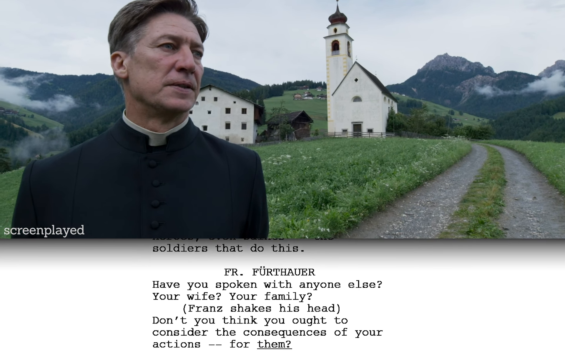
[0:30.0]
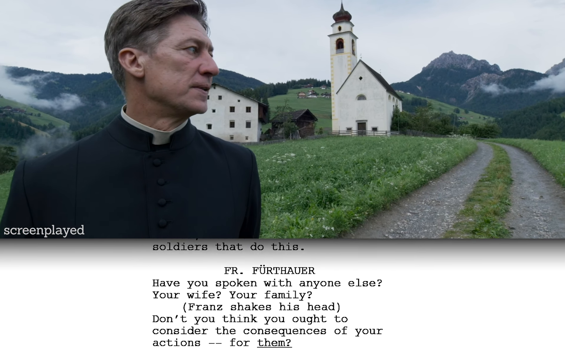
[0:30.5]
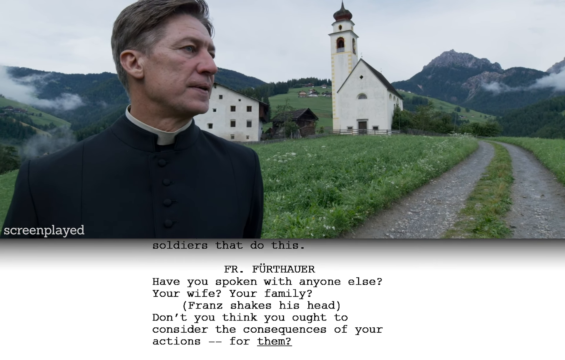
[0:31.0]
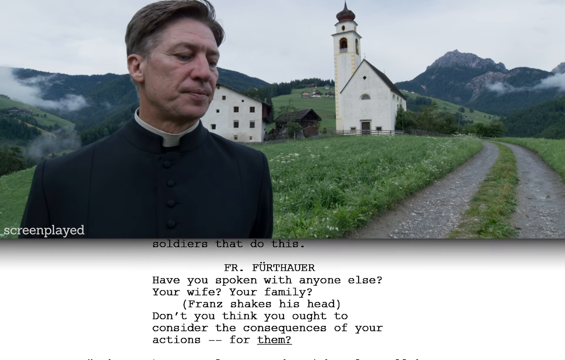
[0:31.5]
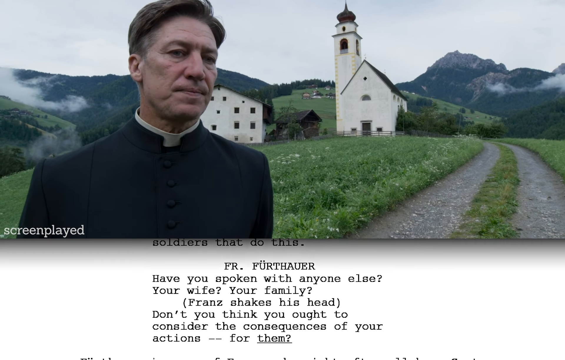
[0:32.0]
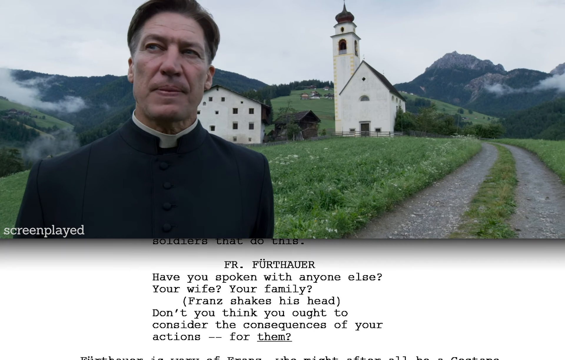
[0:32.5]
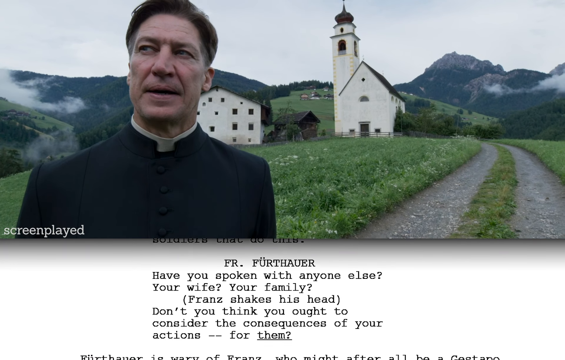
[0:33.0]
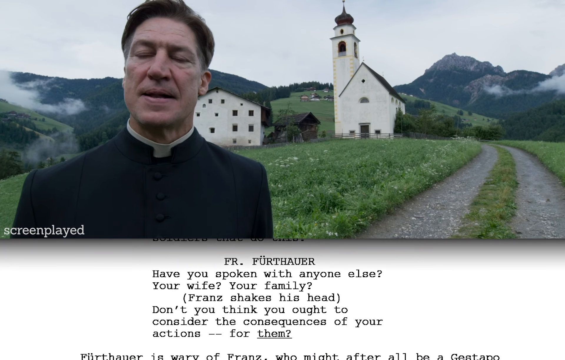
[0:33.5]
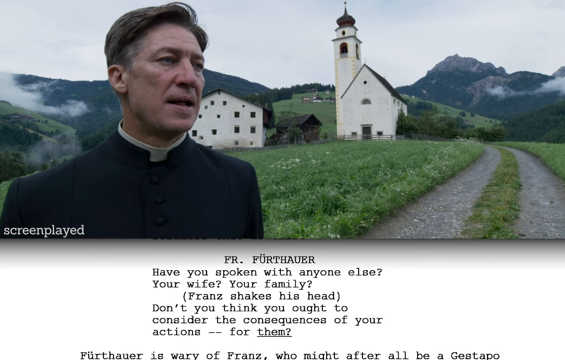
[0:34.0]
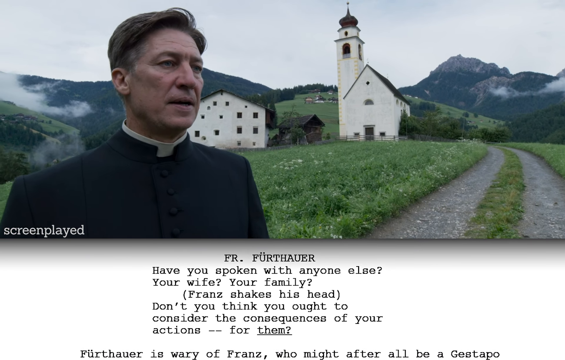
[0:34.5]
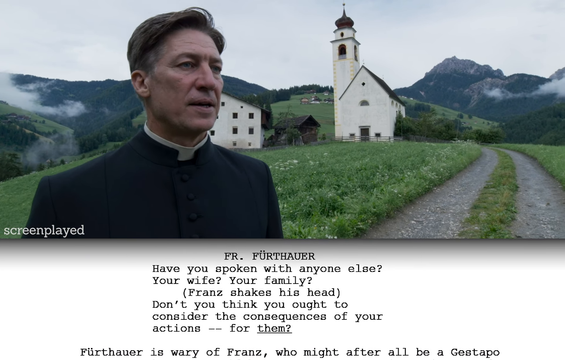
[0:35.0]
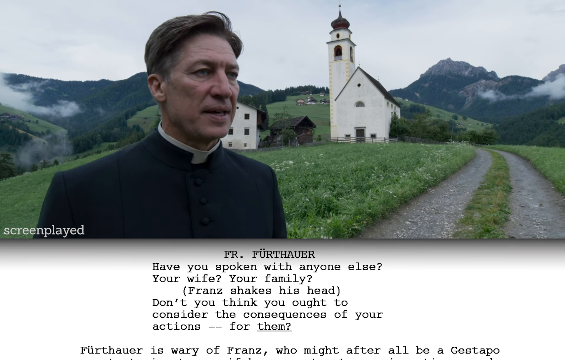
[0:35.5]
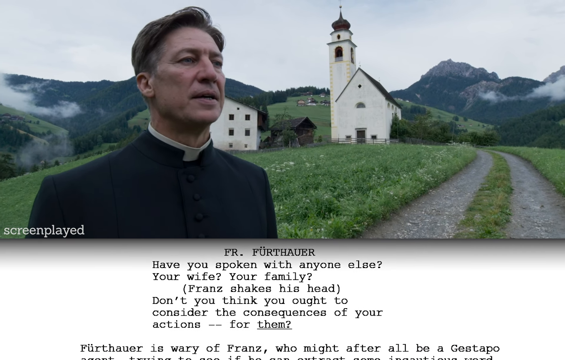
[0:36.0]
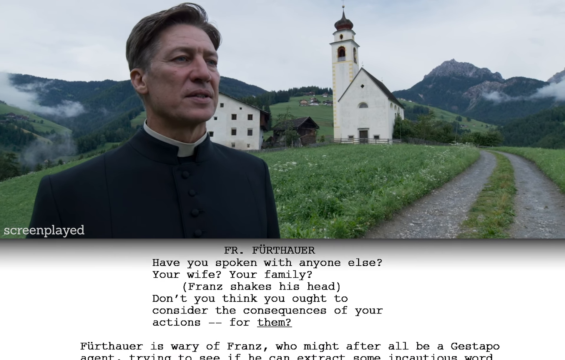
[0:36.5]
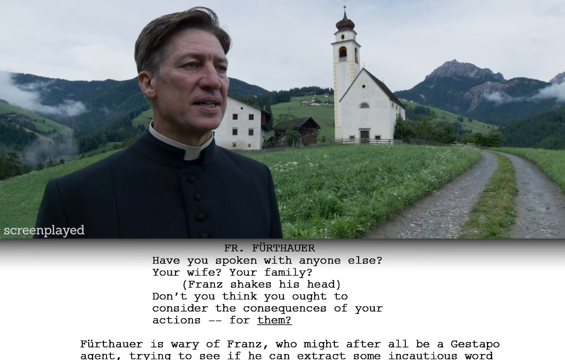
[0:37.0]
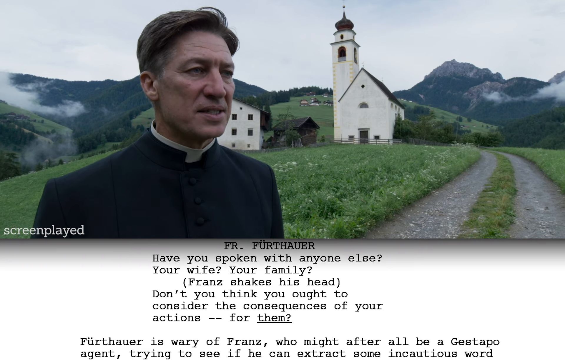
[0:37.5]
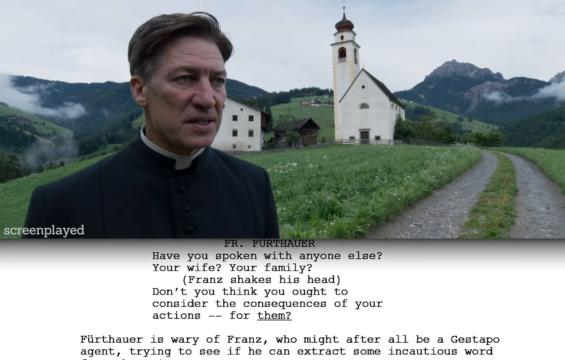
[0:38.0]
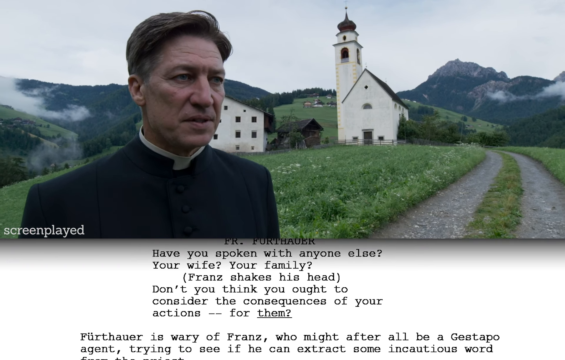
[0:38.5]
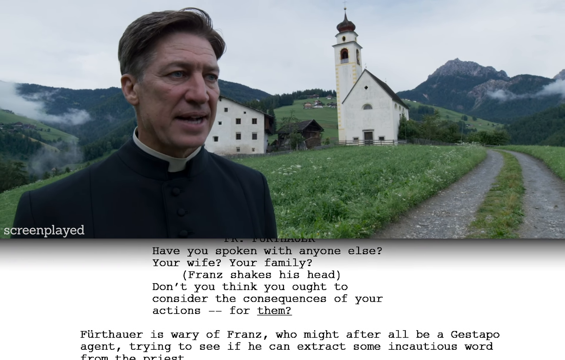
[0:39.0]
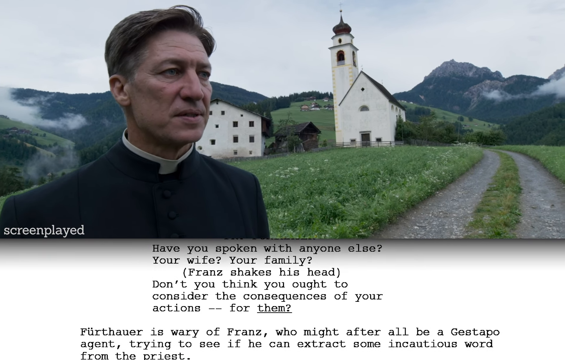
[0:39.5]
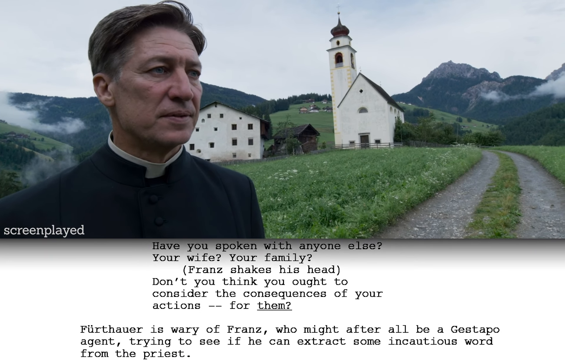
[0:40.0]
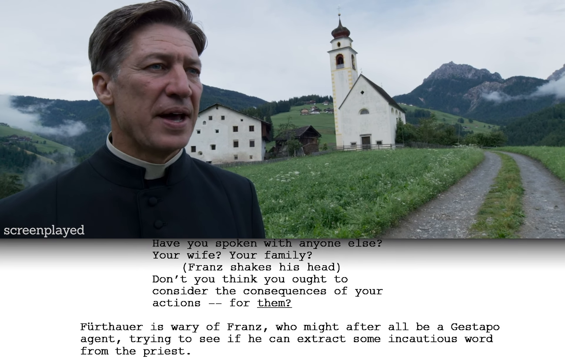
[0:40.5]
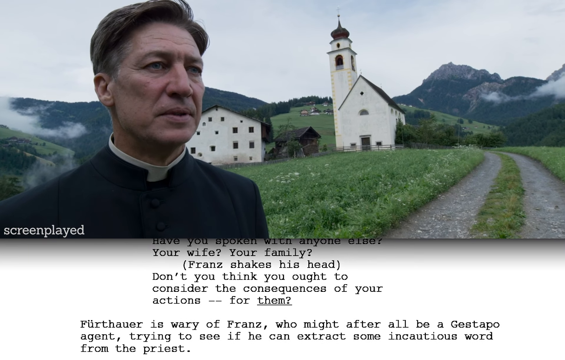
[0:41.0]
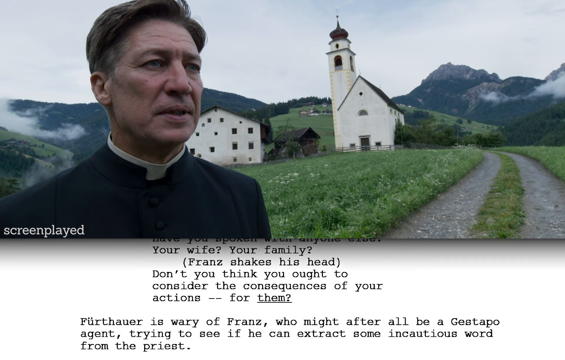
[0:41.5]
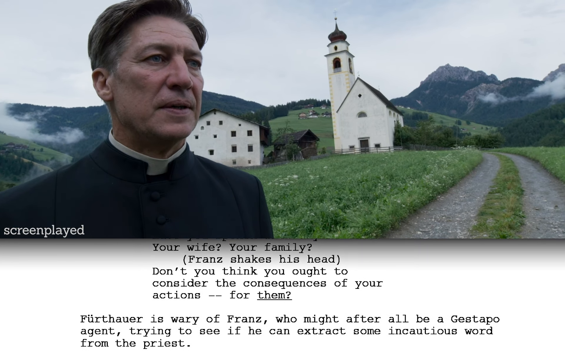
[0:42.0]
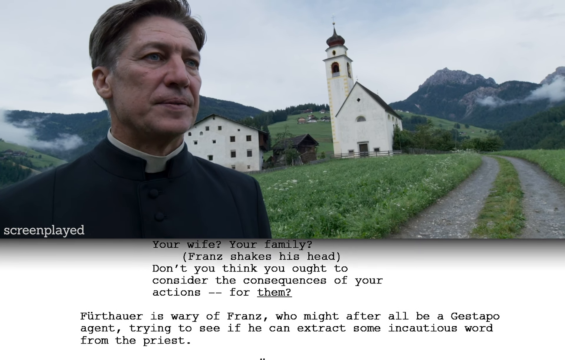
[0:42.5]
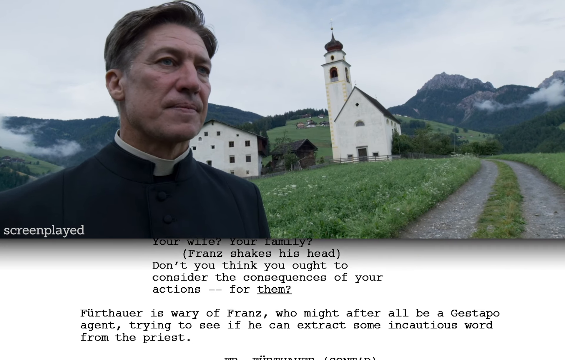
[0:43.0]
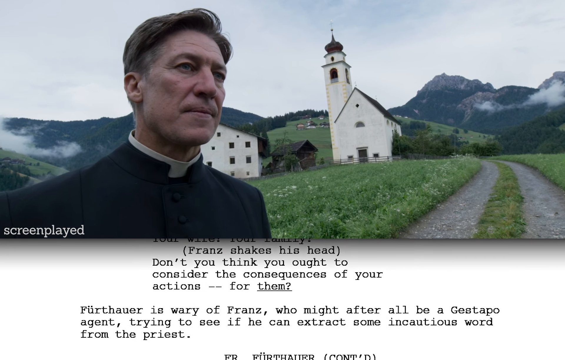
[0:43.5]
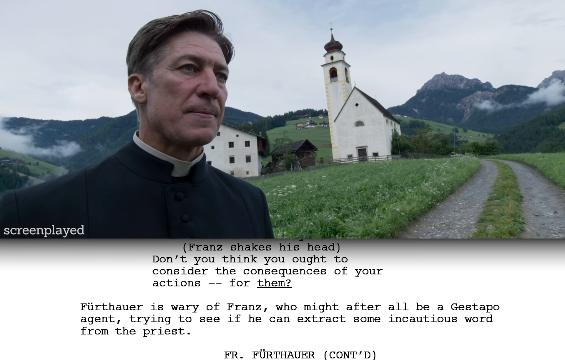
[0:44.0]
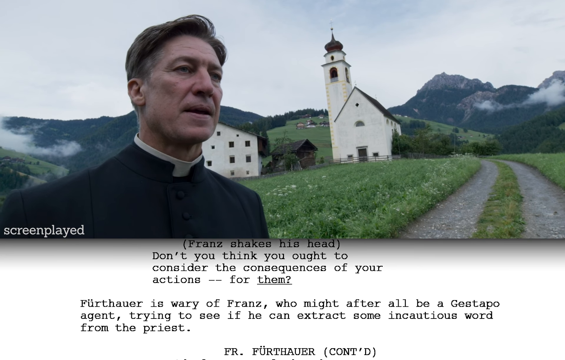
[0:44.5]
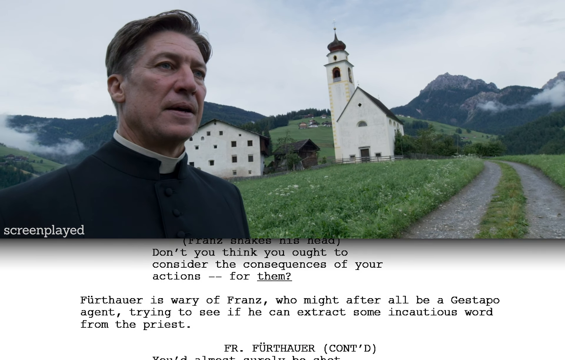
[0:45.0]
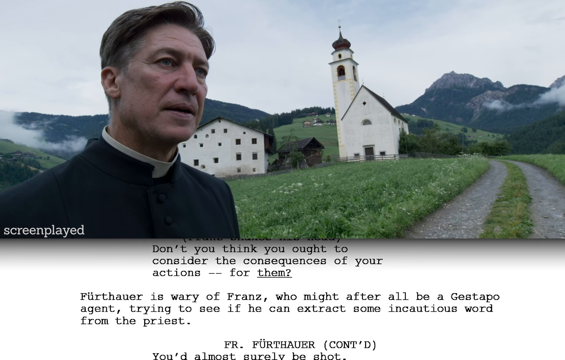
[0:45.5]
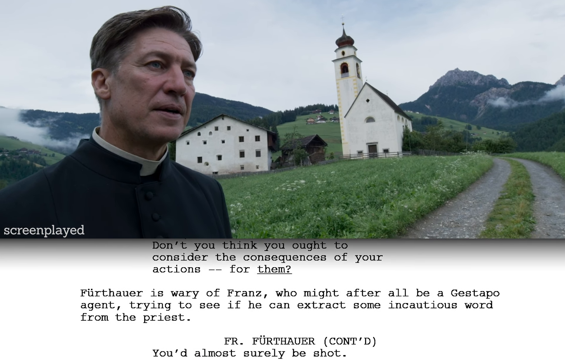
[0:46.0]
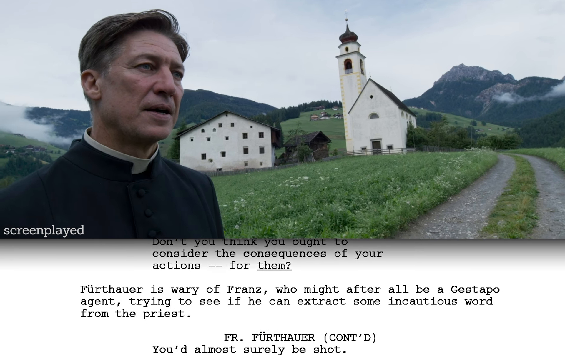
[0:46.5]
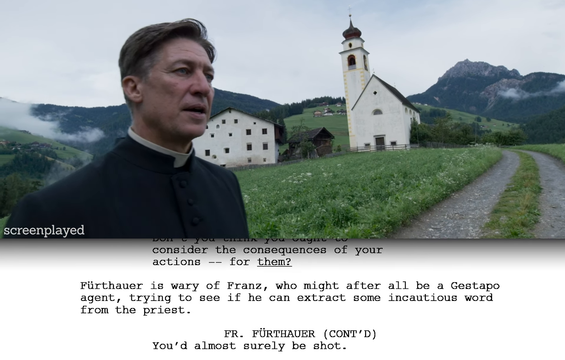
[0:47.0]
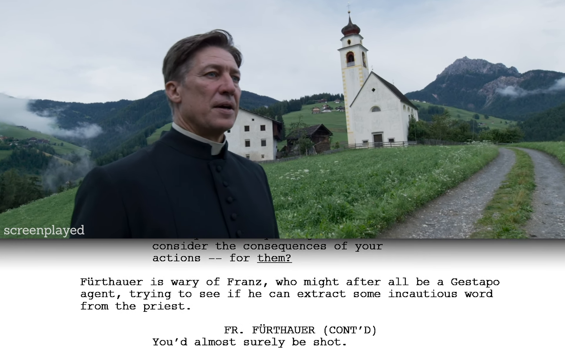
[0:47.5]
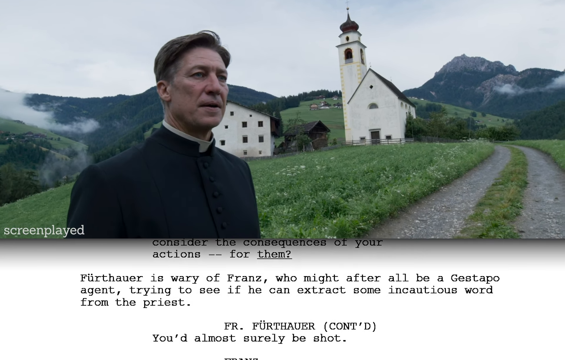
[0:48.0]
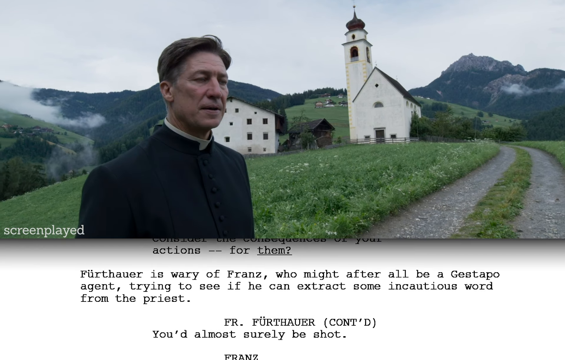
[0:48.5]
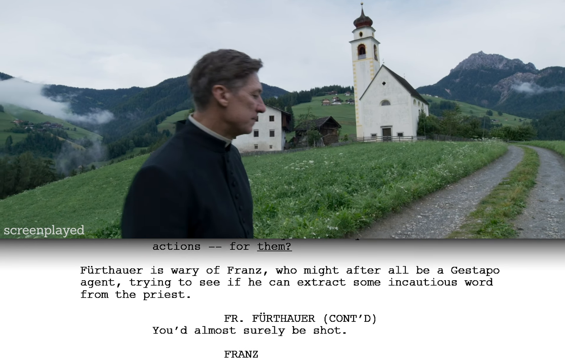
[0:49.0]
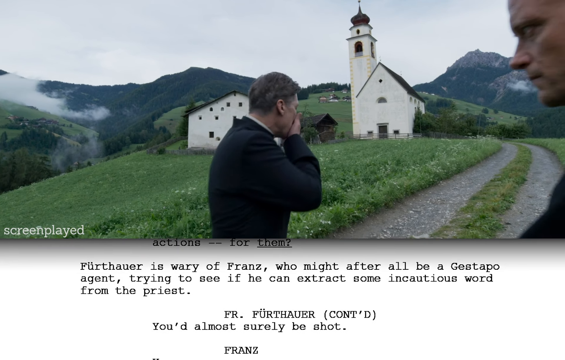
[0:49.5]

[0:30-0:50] Another message appears at the bottom of the screen, reading: "Have you spoken with anyone else? Your wife? Your family? Don't you think you ought to consider the consequences of your actions for them?" More text follows, including "some incautious word from the priest." The story is relayed at the bottom of the screen while the top part apparently acts out that story. The camera focuses on the pastor, who eventually looks like he is walking away. The two men seem to be having a very serious conversation; both the man on the right-hand side and the man on the left-hand side have a lot to say. He has a very disappointed look on his face.